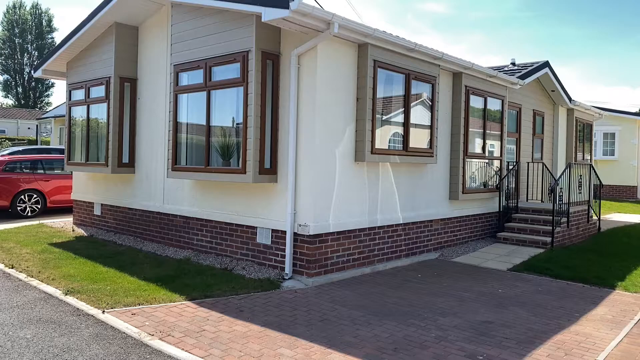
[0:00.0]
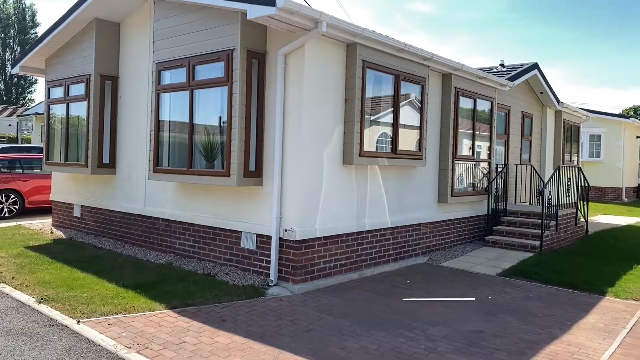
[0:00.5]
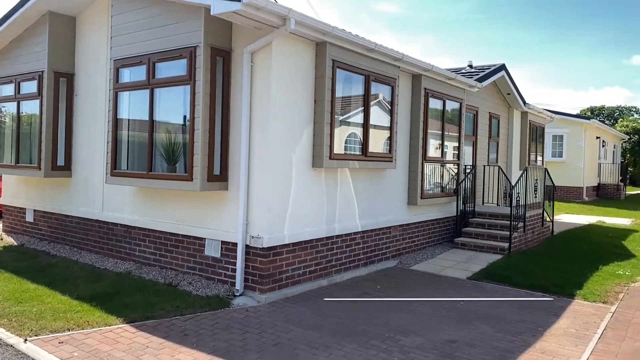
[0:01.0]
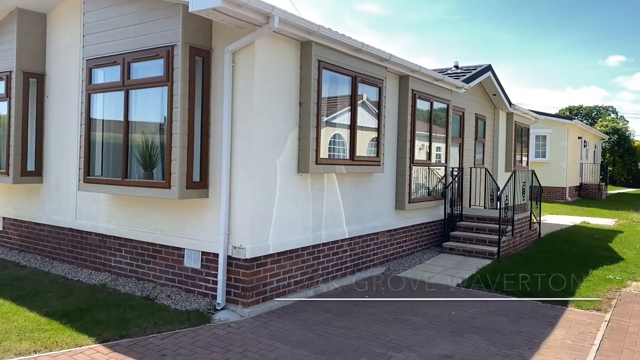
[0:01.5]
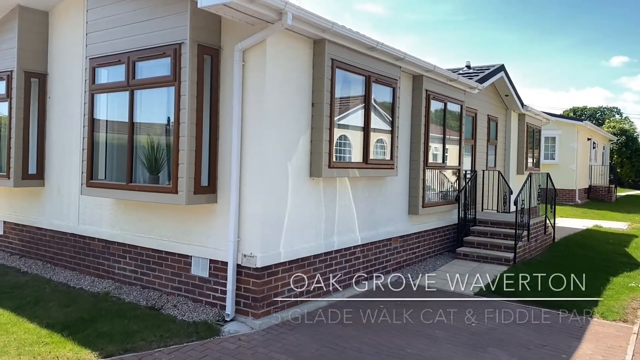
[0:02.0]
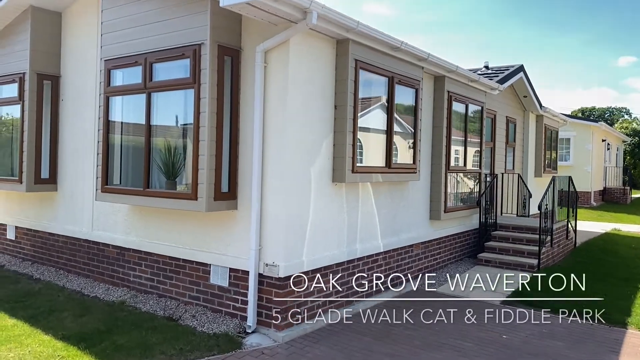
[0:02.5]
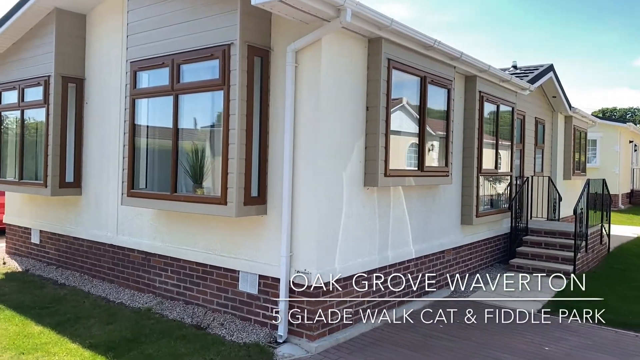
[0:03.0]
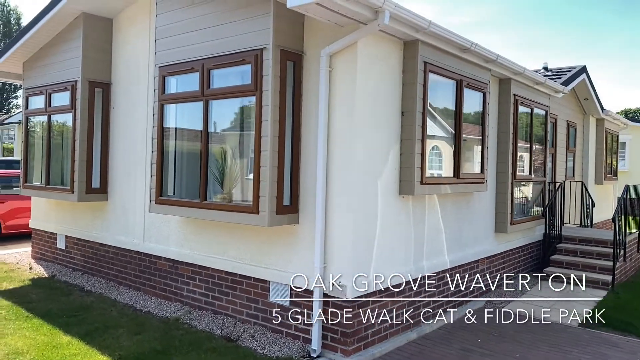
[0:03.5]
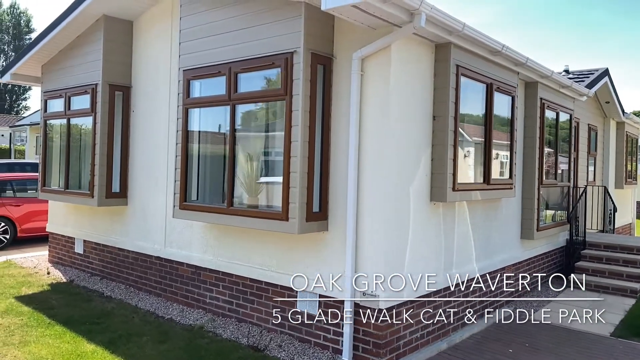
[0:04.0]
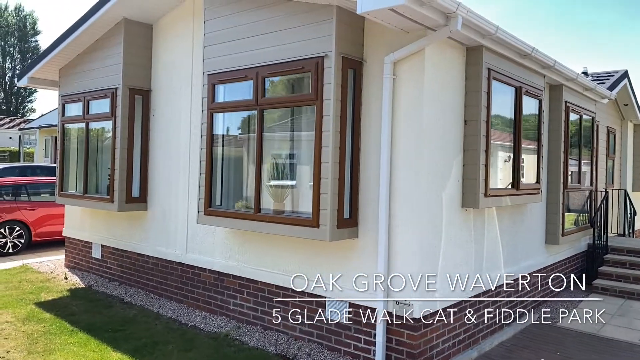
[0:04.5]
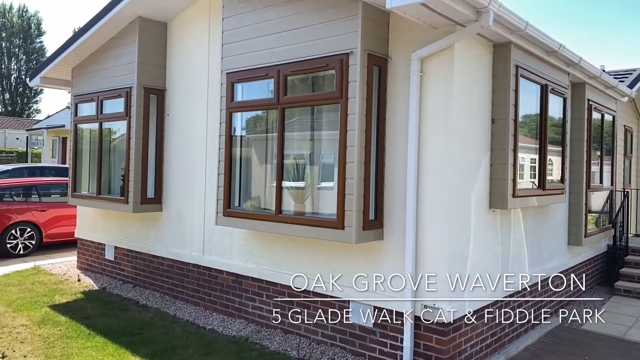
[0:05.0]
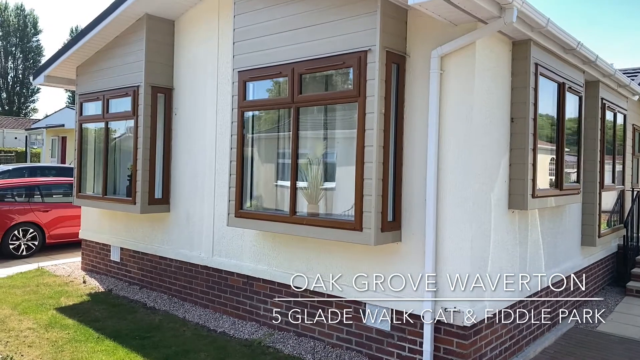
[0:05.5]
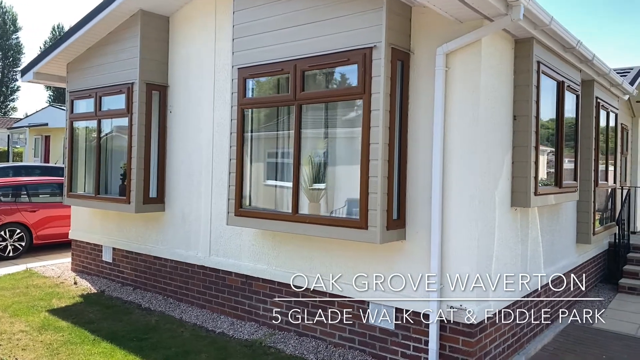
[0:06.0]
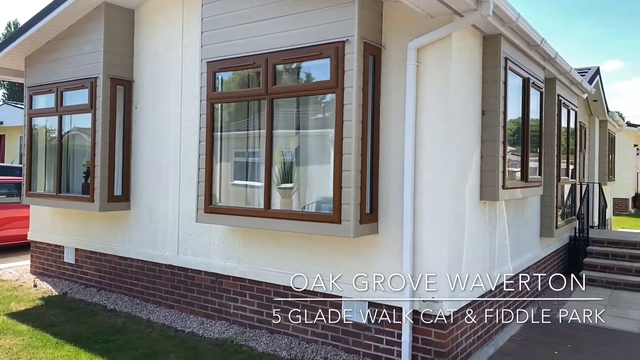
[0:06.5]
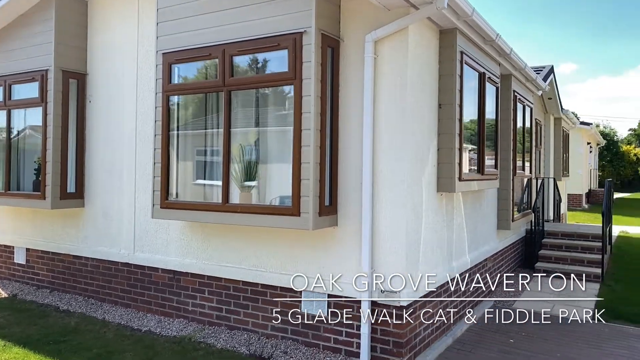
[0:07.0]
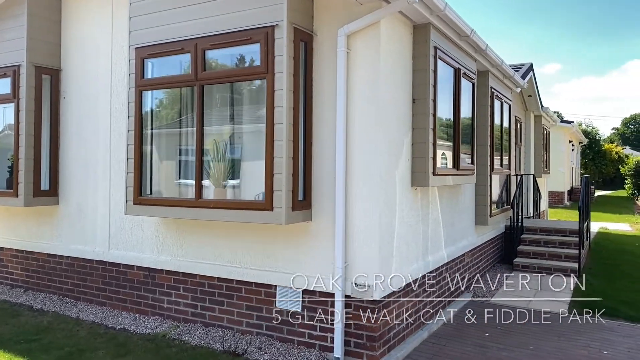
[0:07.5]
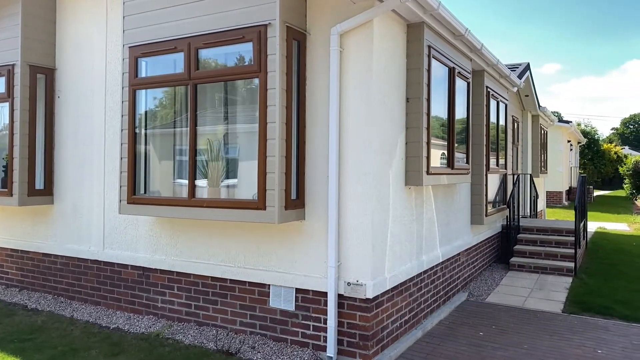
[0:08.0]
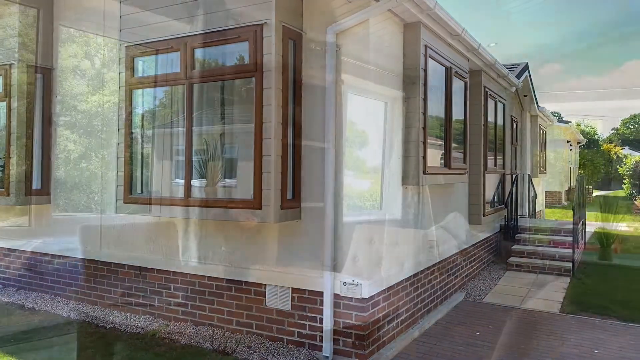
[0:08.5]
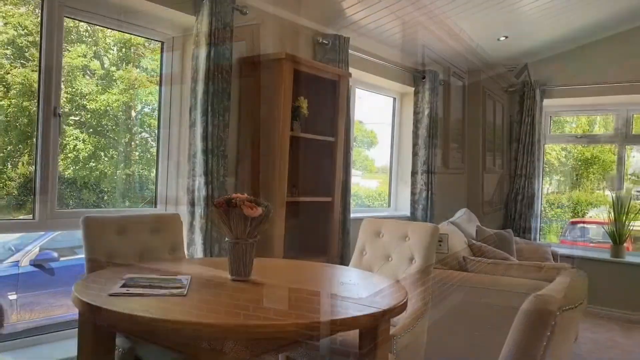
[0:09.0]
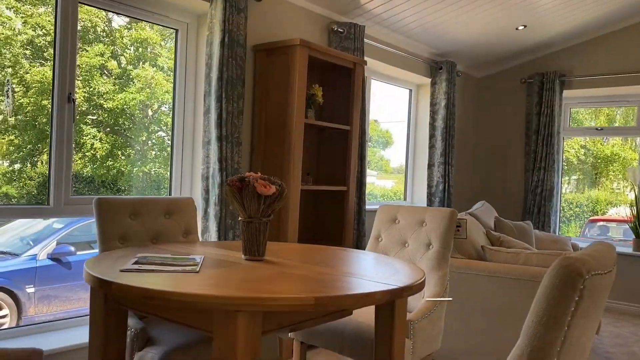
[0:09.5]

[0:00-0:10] A small home, roughly the size of a trailer home, is shown from outside. Captions in the bottom right read "Oak Grove Waverton," followed by a white dividing line and then "5 Glade Walk Cat & Fiddle Park." The view sort of moves around to the left side of the building, while a staircase on the right sort of leads up to the main door. There are two square-shaped windows on the sides with the curtains drawn, and on the outside of the curtains there is a potted plant for each window. A white pipe on the outside carries the top drain down to ground level.